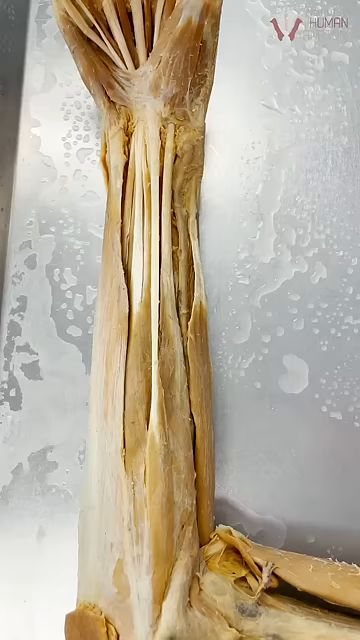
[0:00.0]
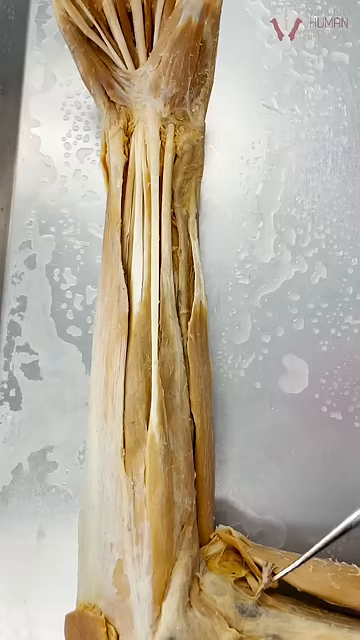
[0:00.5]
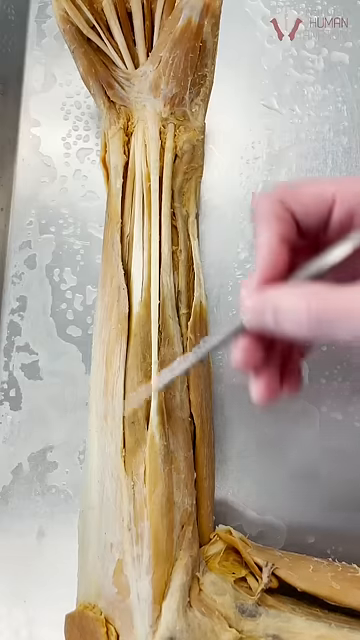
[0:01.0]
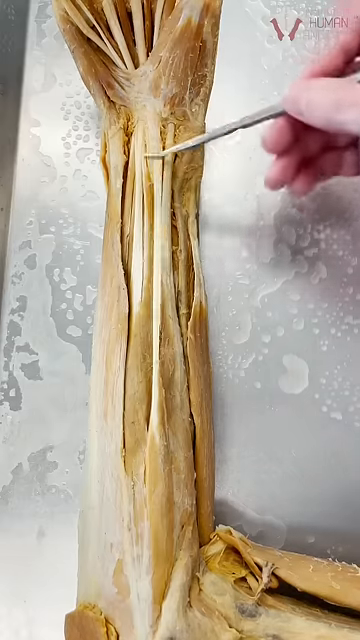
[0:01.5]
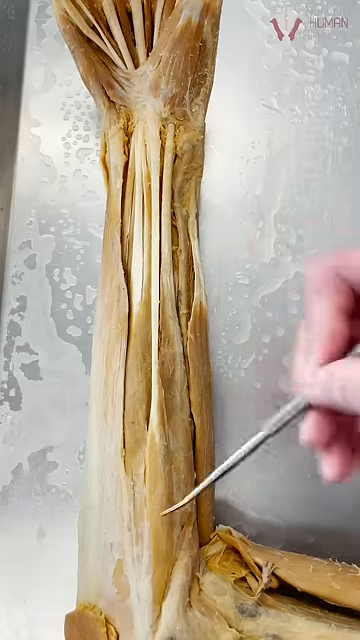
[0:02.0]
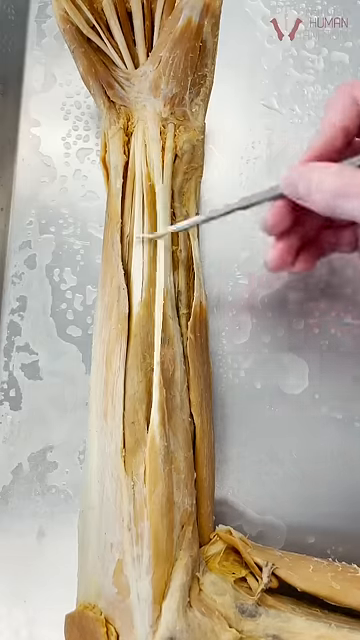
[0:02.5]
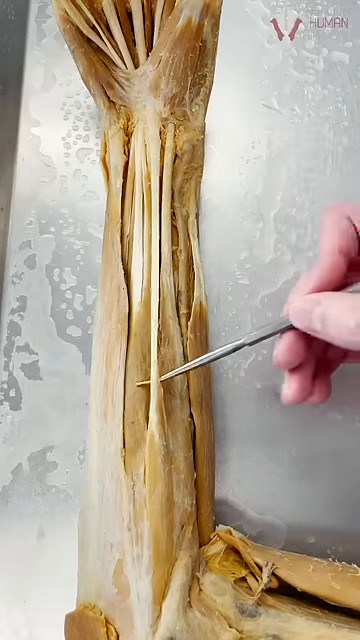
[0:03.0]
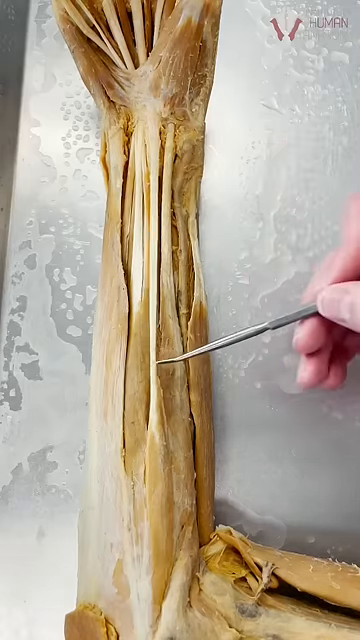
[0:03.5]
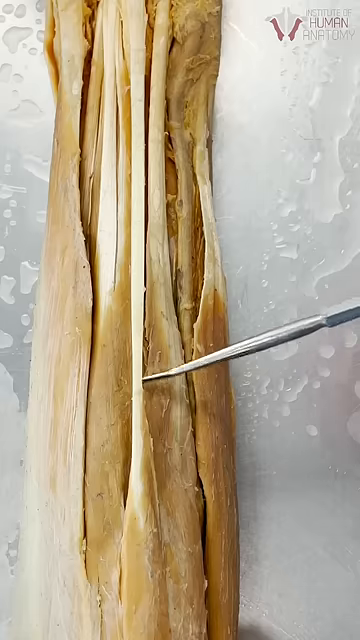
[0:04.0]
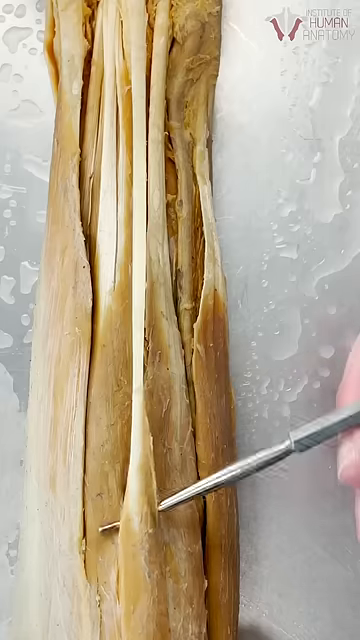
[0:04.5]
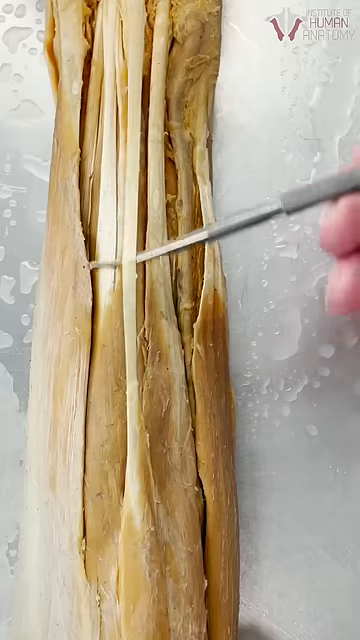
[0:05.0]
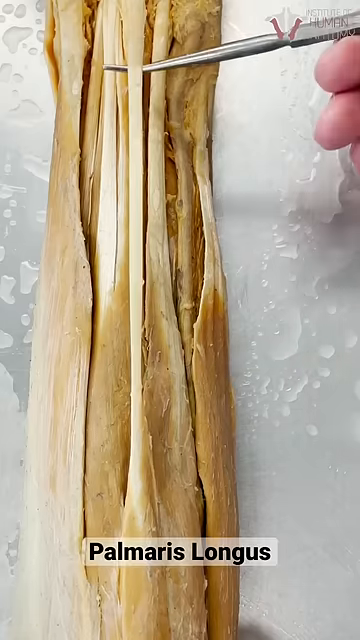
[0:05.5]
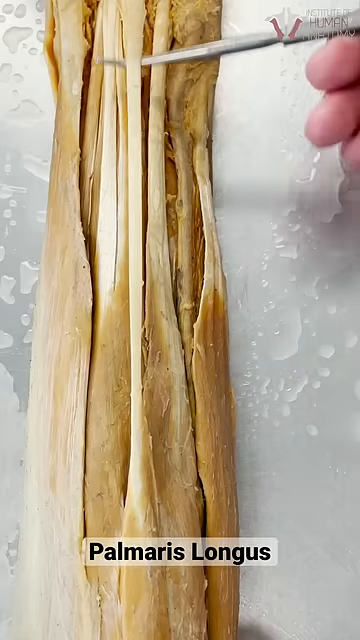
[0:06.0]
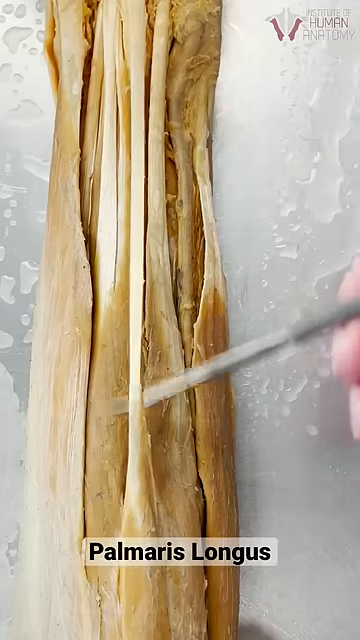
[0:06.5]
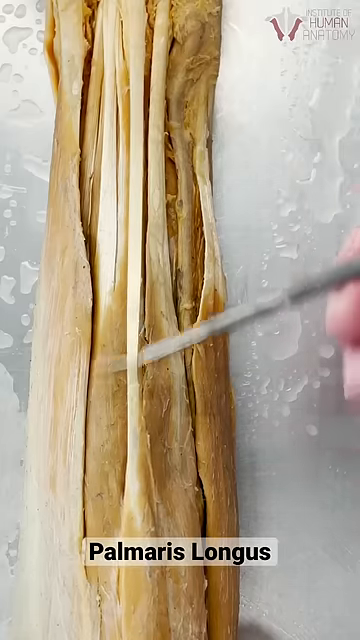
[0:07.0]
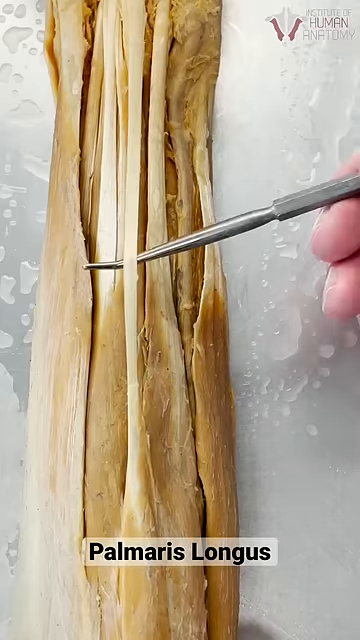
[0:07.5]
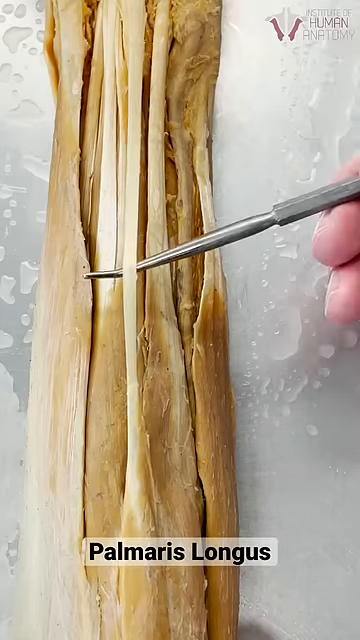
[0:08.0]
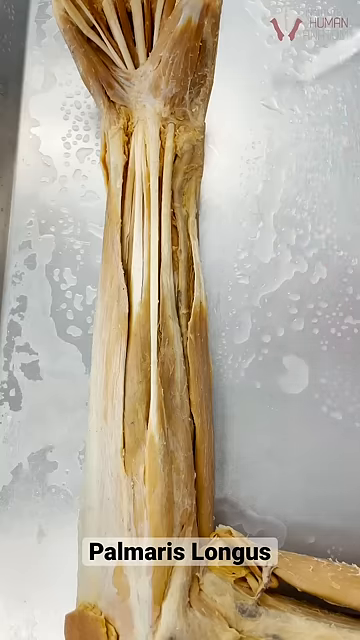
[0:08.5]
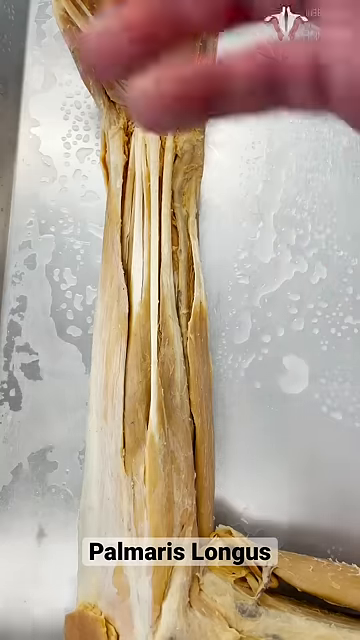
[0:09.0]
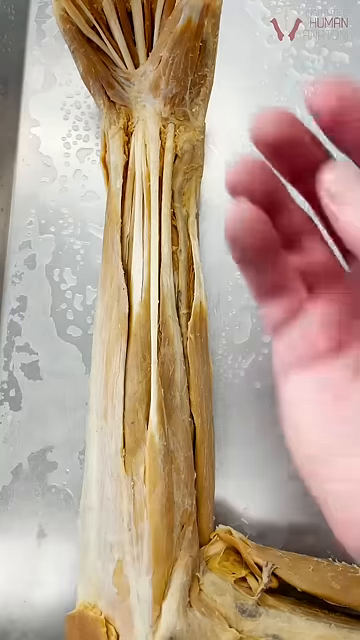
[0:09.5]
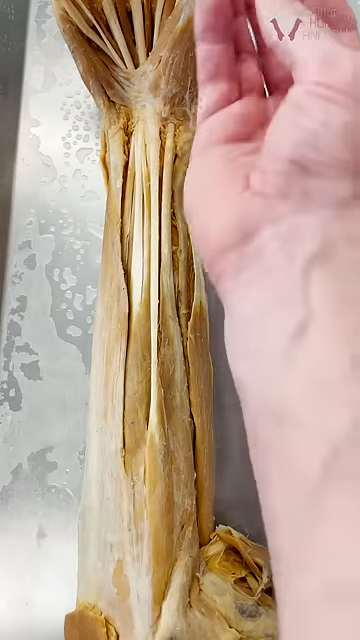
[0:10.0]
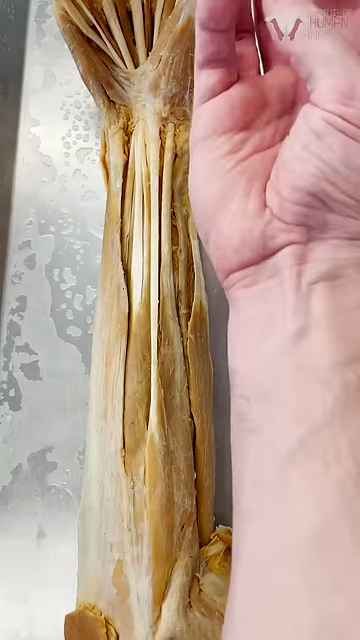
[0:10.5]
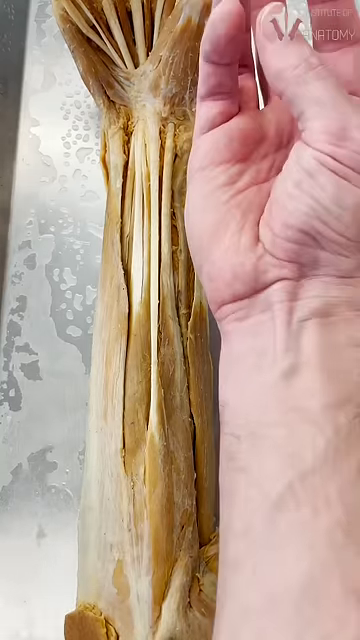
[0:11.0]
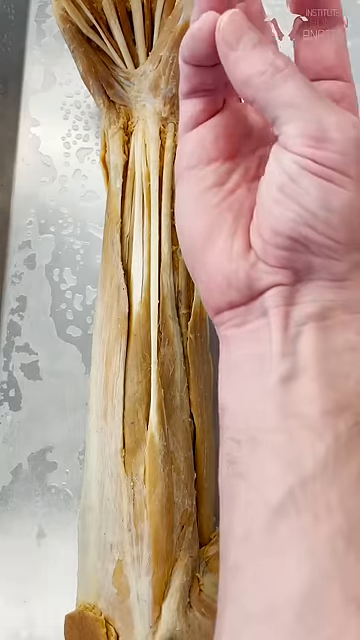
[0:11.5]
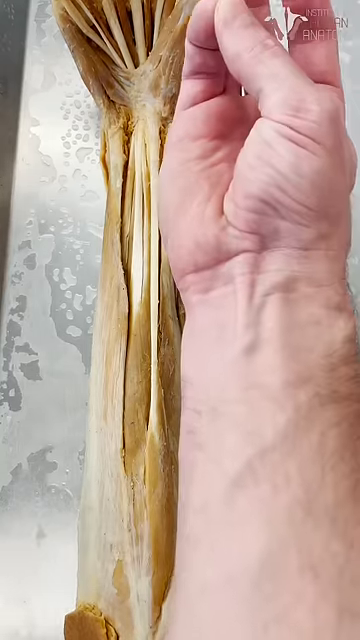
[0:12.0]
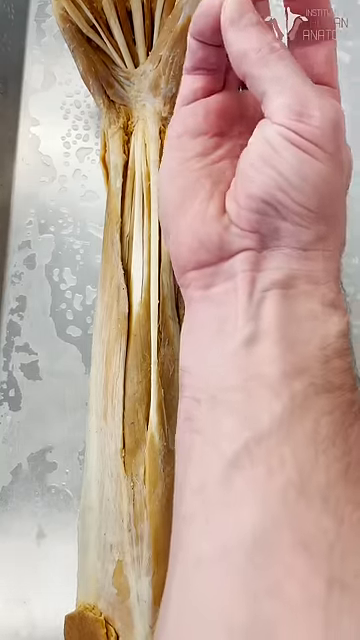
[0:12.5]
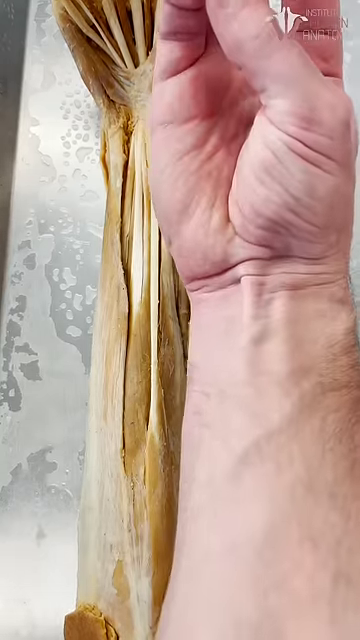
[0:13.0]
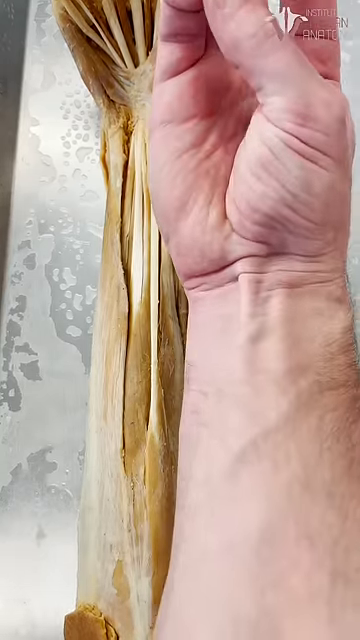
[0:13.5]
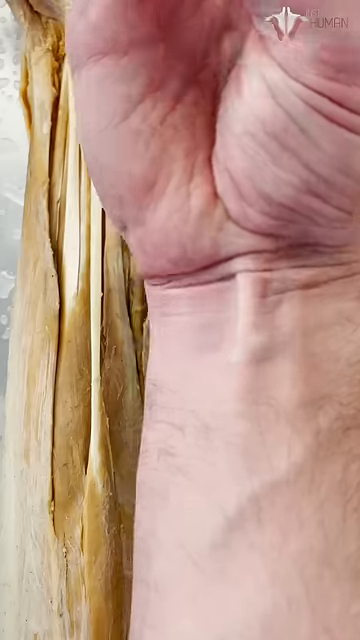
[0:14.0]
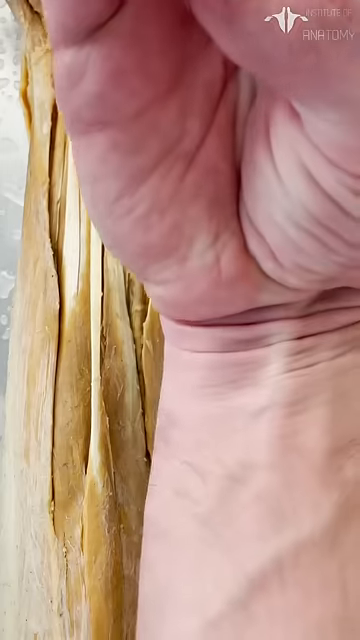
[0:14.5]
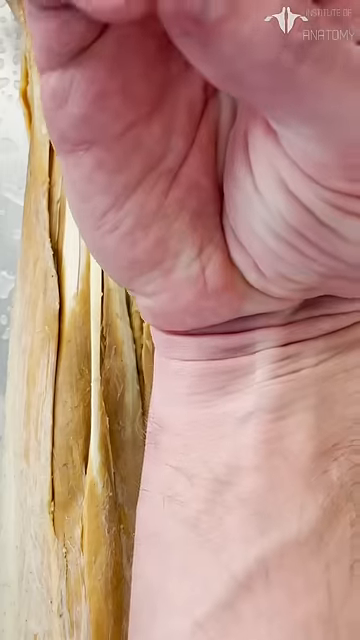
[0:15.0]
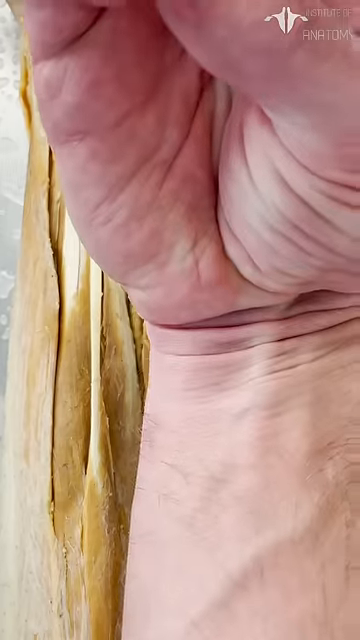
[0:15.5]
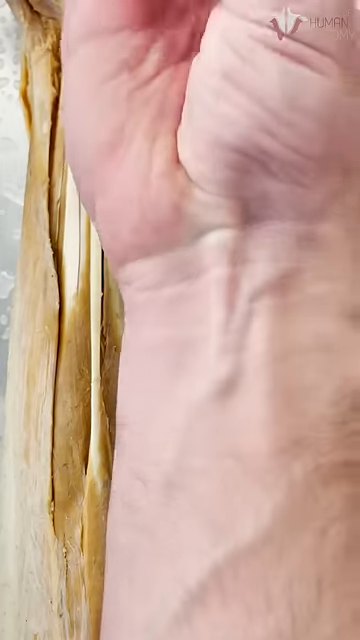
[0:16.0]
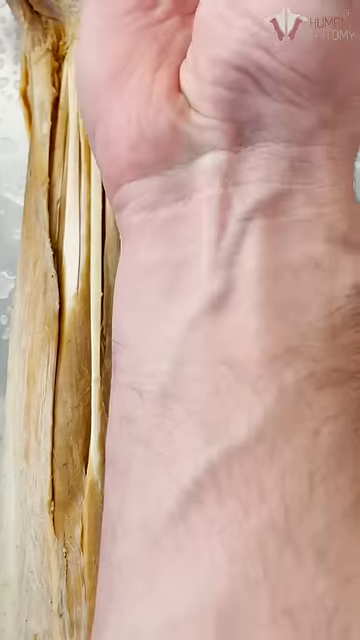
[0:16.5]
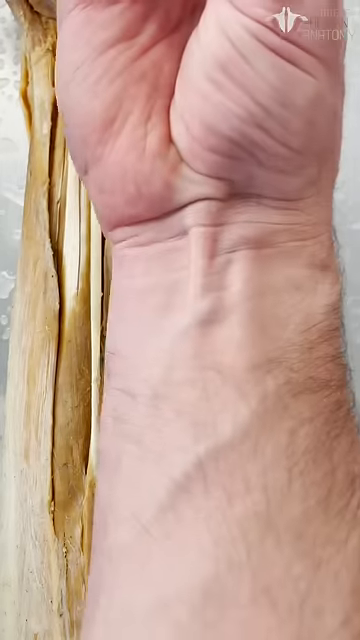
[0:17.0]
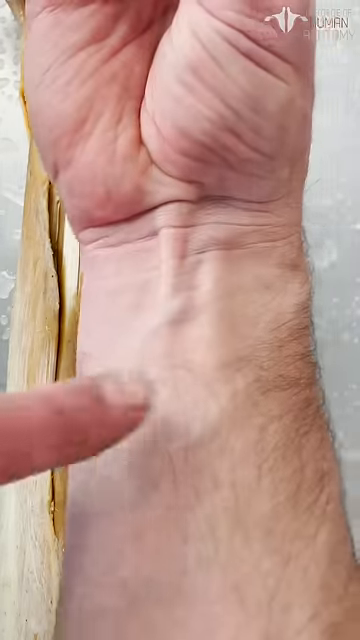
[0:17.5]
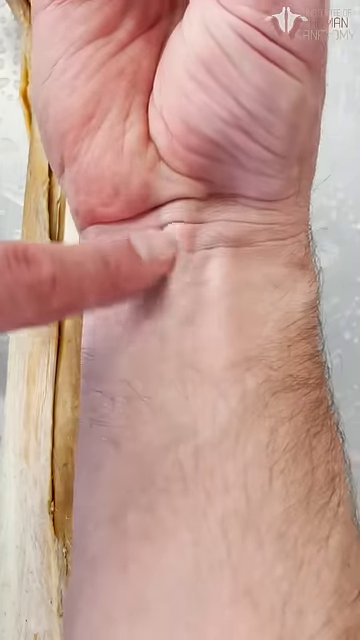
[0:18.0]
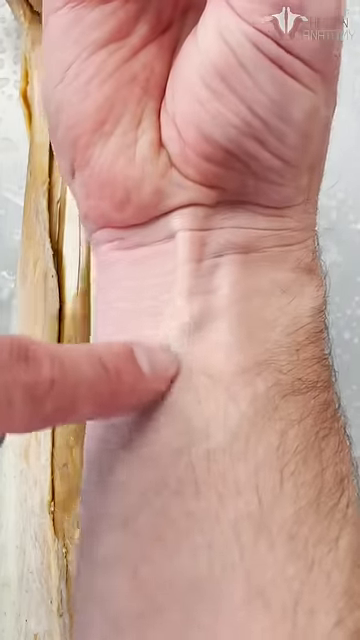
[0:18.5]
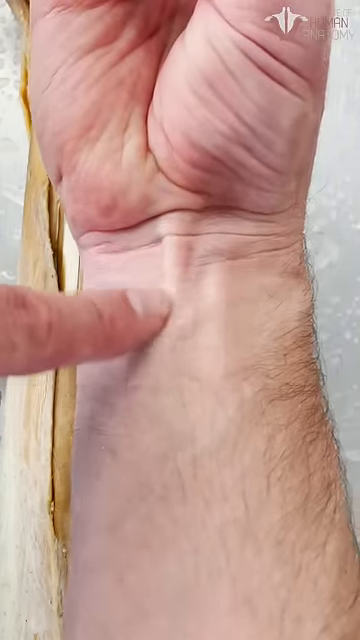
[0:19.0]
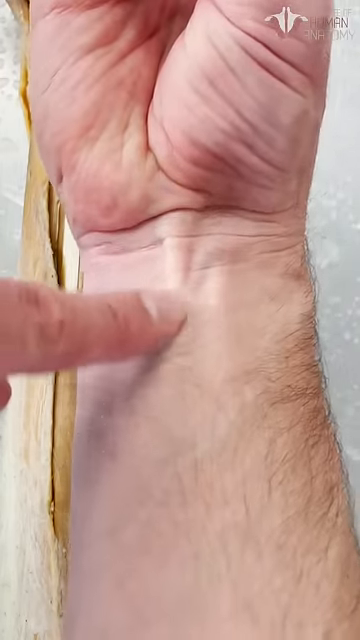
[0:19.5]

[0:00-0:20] A model of the inside of a forearm is shown; it is all white, so it is not gory or graphic in any way. A fair-skinned hand holds something like a scalpel, poking between a strand of muscle in the forearm, and at the bottom a label names the muscle "palmaris longus." The scalpel kind of lifts it a little, emphasizing where it is. Then a hand moves into view, and most of the forearm is visible as the person tries to show where this muscle is. The person moves their hand to show the line at their wrist, then uses a finger of their other hand to point at the wrist and show exactly where the palmaris longus is. In the top right corner of the video, text reads "Institute of Human Anatomy."